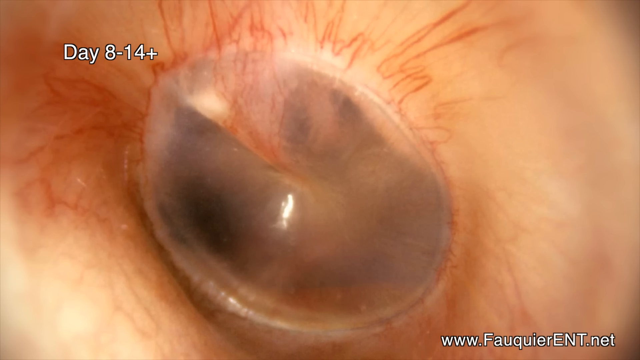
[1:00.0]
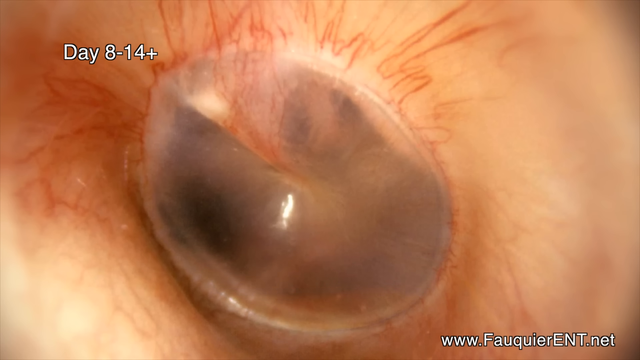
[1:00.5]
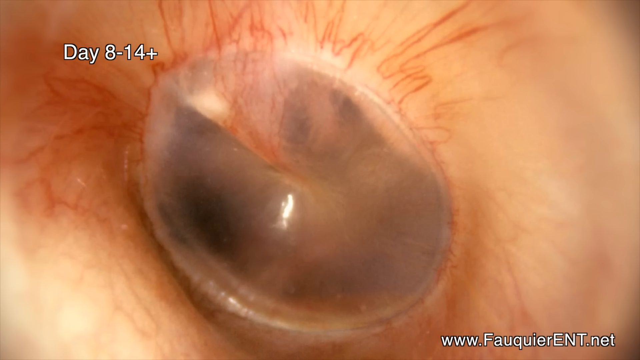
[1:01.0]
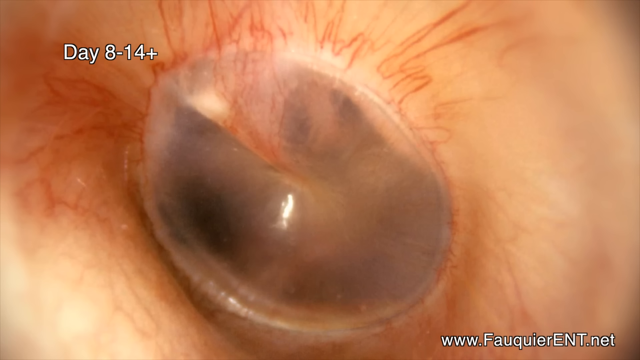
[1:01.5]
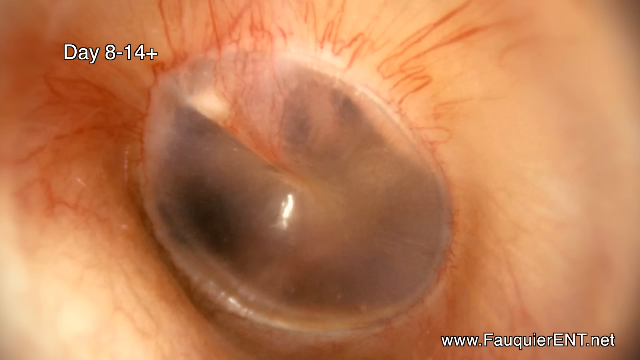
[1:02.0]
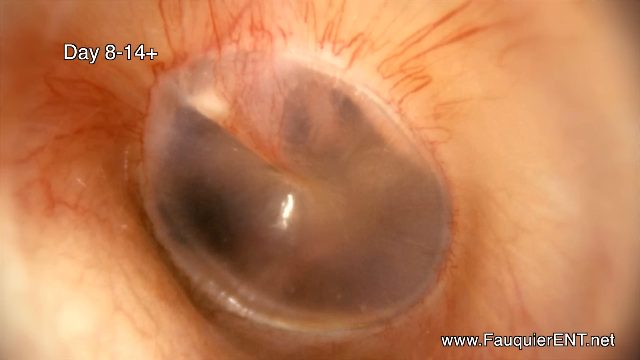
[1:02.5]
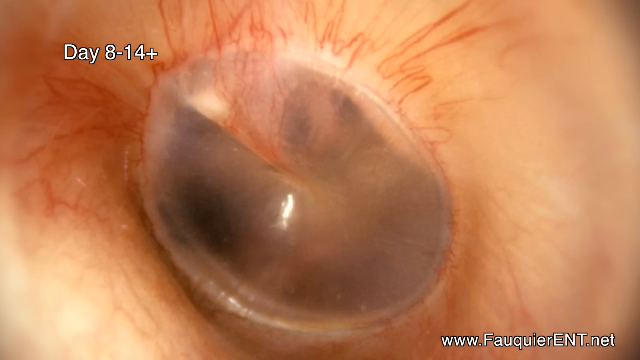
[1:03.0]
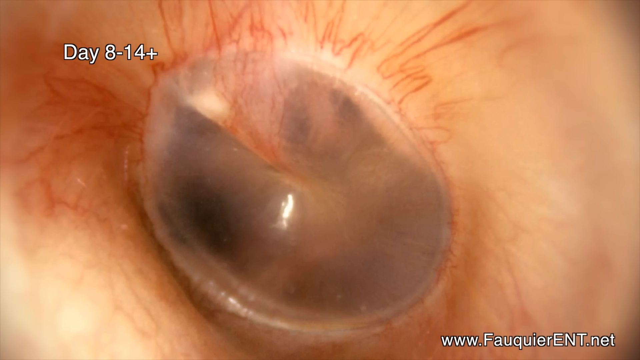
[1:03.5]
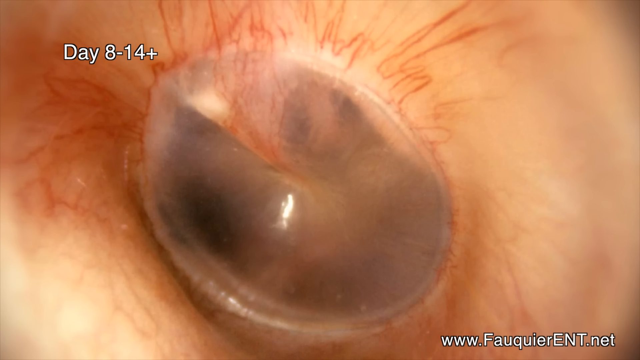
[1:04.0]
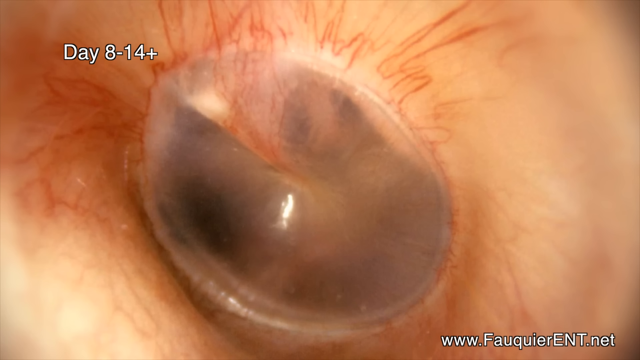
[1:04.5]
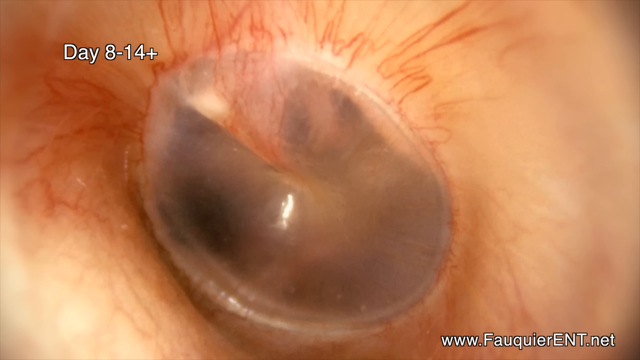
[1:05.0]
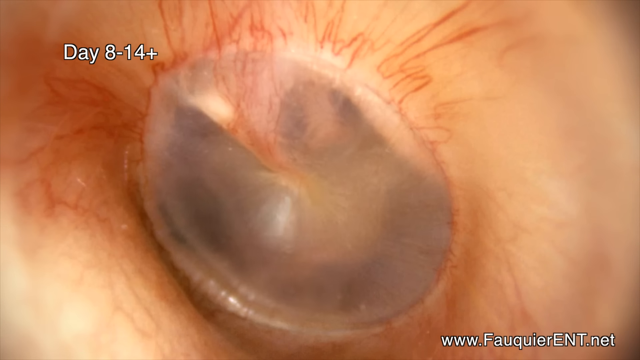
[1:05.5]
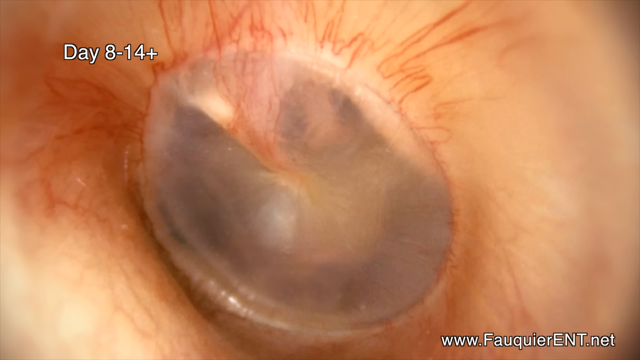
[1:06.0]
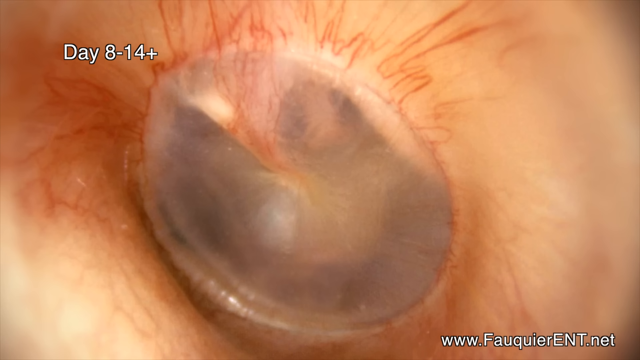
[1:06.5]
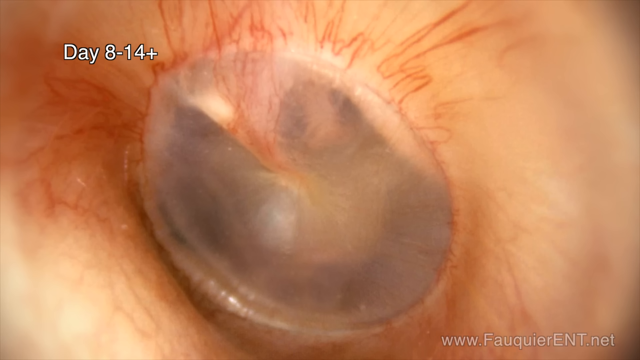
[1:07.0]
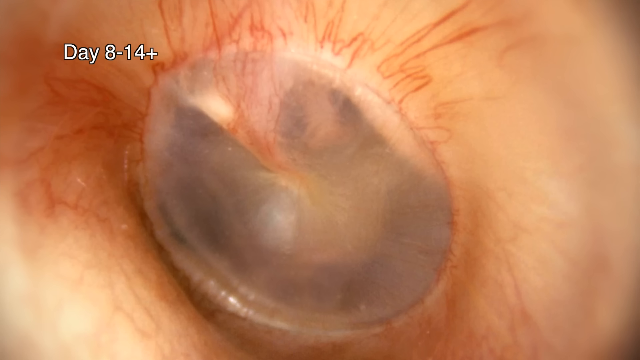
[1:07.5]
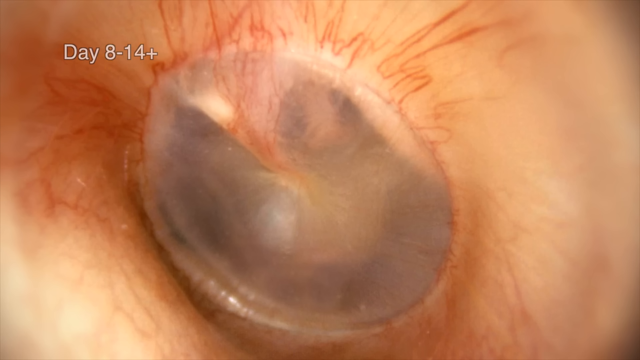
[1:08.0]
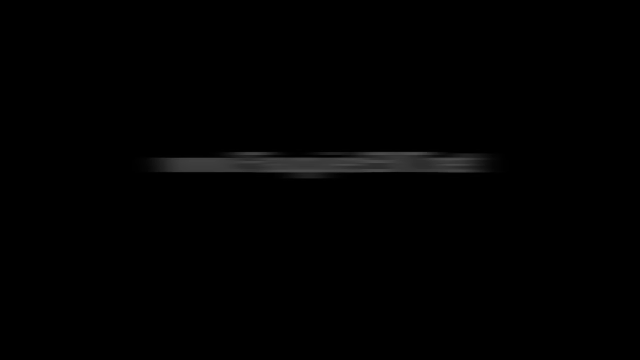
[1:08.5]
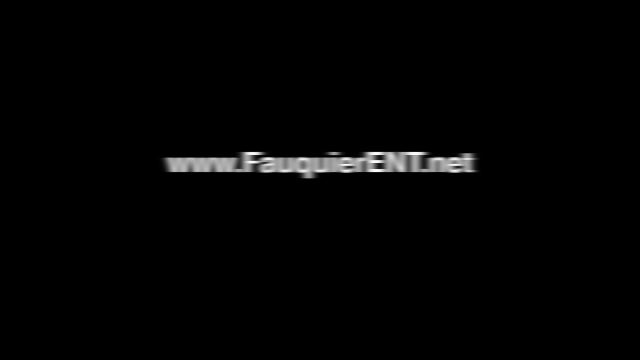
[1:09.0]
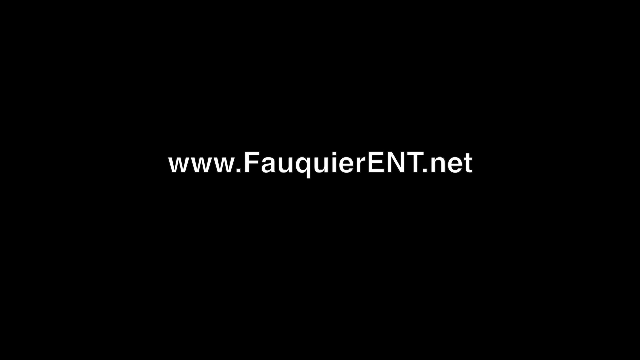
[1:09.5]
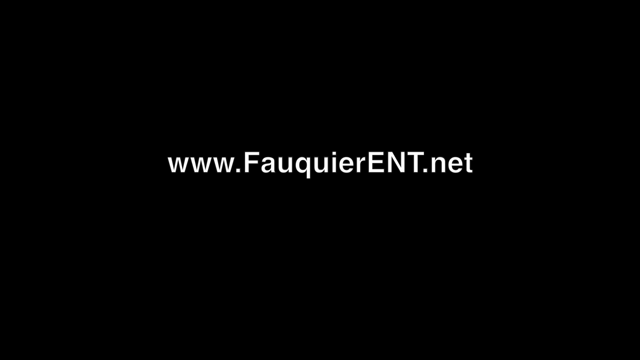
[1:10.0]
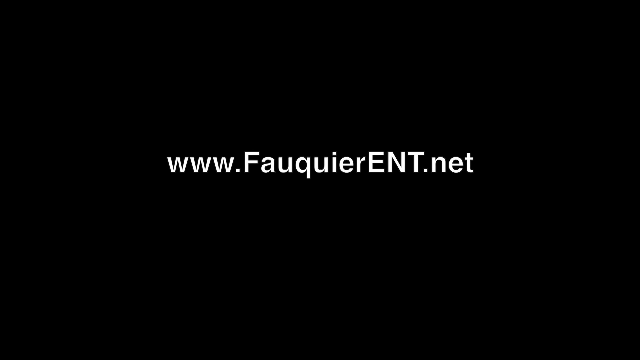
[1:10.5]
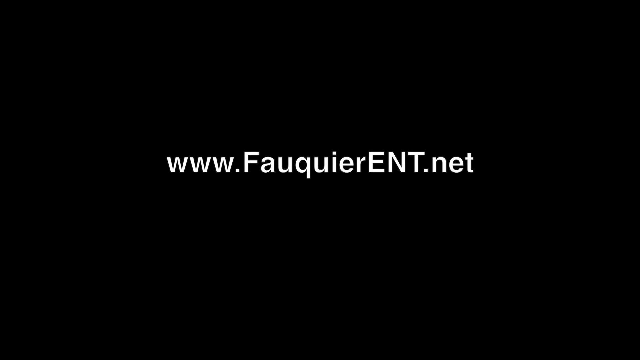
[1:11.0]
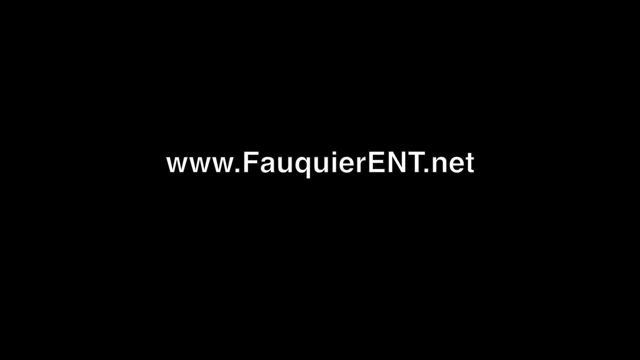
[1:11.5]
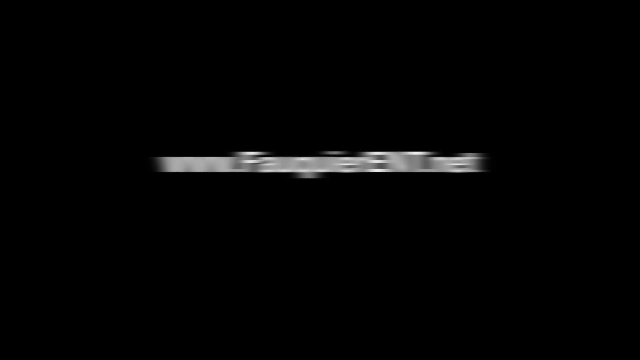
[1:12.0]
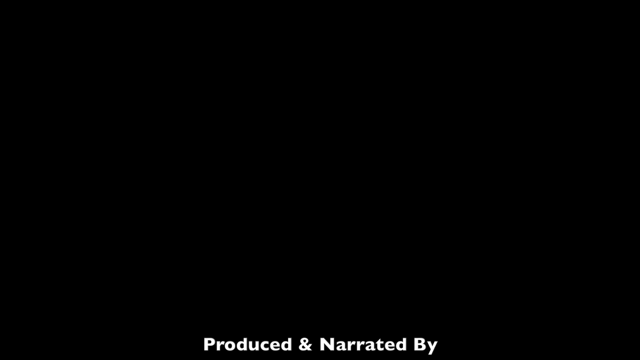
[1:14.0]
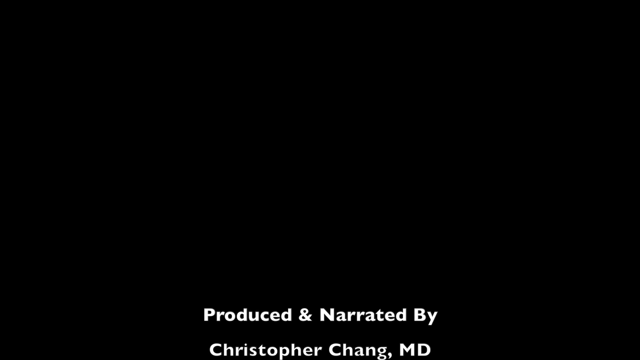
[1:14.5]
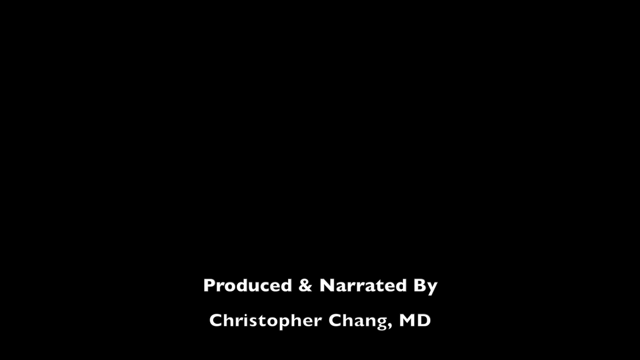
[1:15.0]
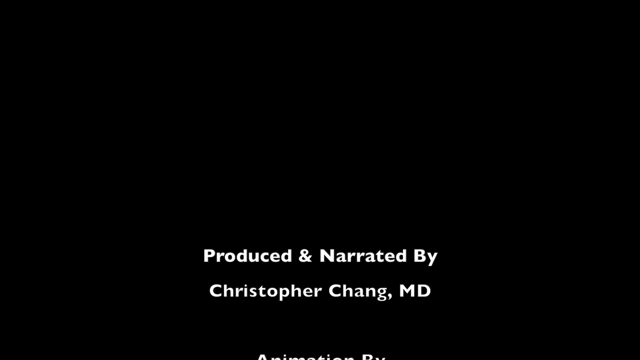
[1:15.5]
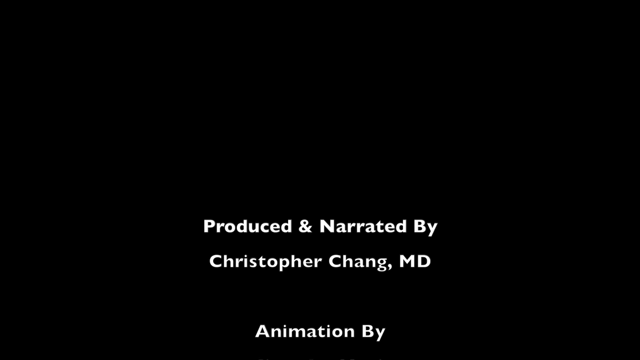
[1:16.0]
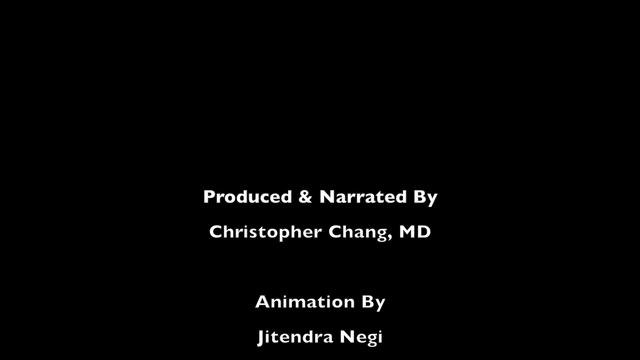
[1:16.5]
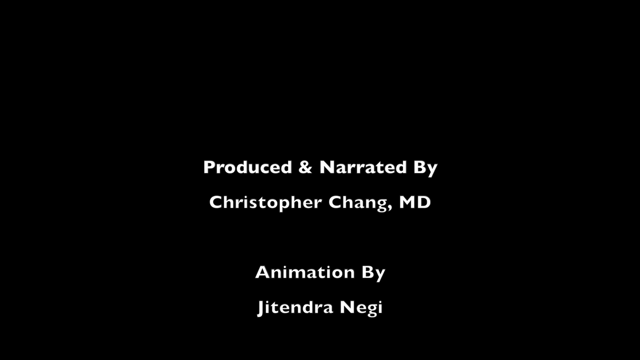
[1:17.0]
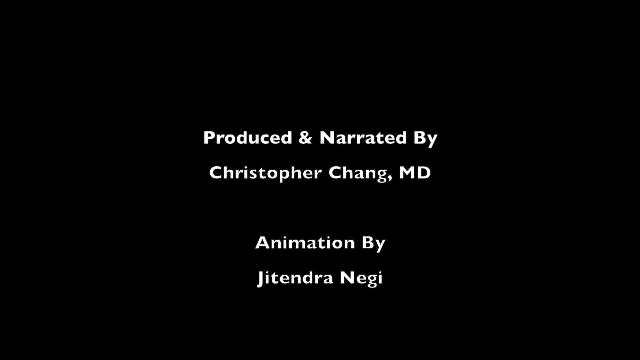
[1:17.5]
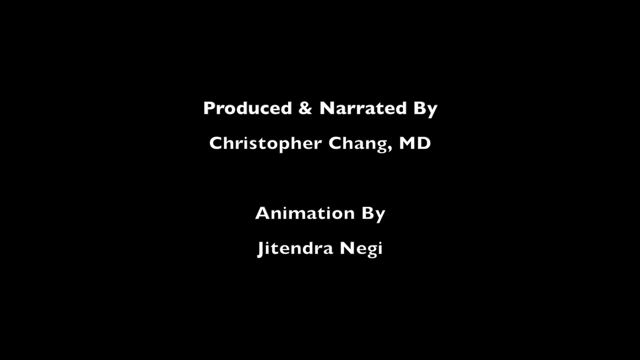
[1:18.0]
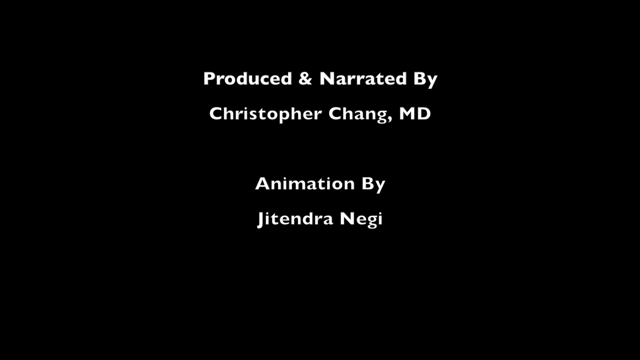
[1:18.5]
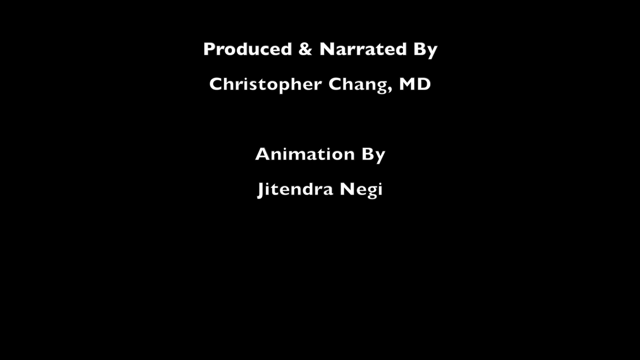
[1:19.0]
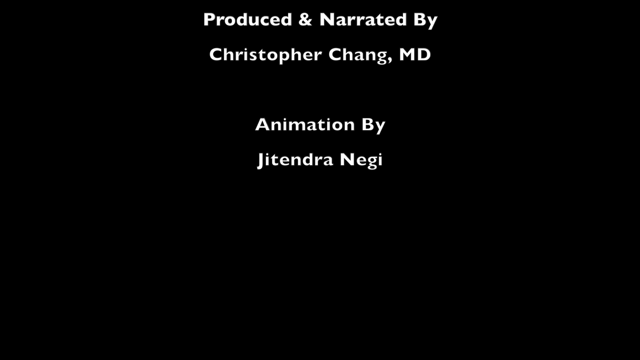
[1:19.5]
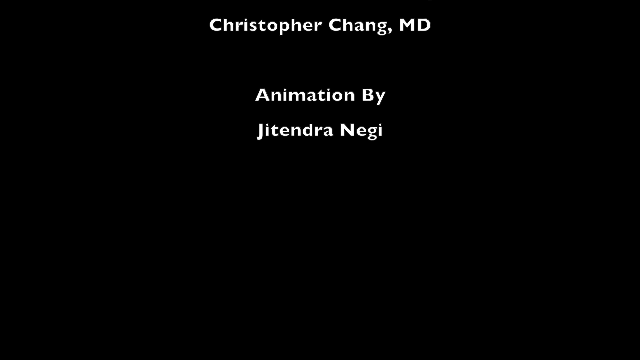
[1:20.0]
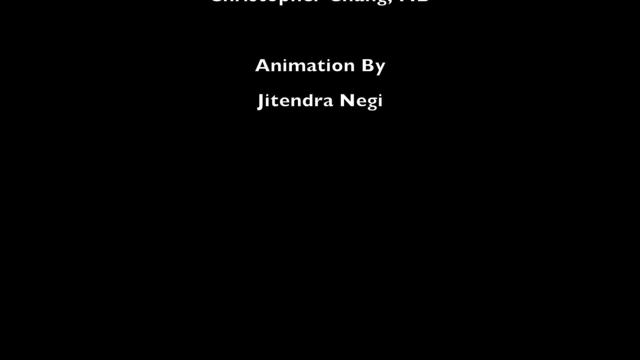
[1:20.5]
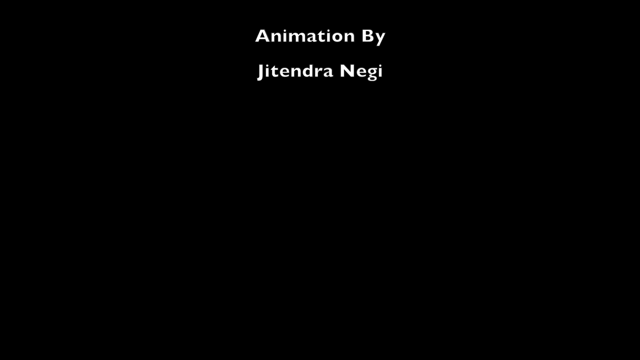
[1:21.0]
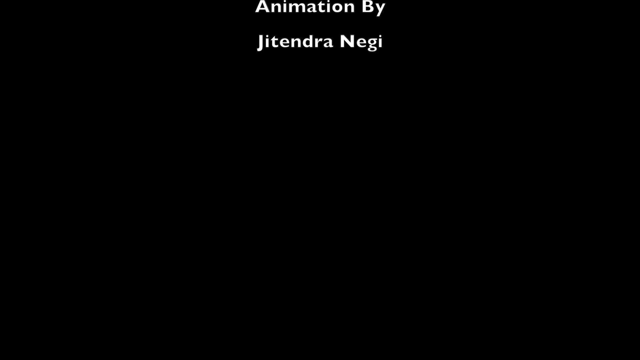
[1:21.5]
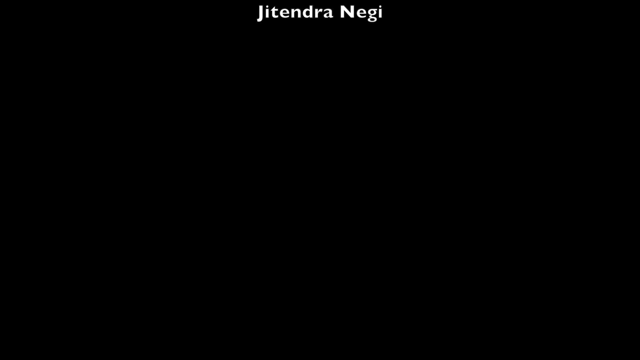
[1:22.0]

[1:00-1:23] While the pus subsides, the area under the transparent layer turns almost black. Once the pus is drained, the area in the transparent layer is no longer dark and becomes a bright color again. The area surrounding the circle does not change color while the layer is black and stays the same the entire time, looking like a normal color as if healed. The next shot shows a website, "www.fakierent.net," and credits at the end show that it was produced and narrated by Christopher Chang, MD, with animation by Jitendra Nagy.